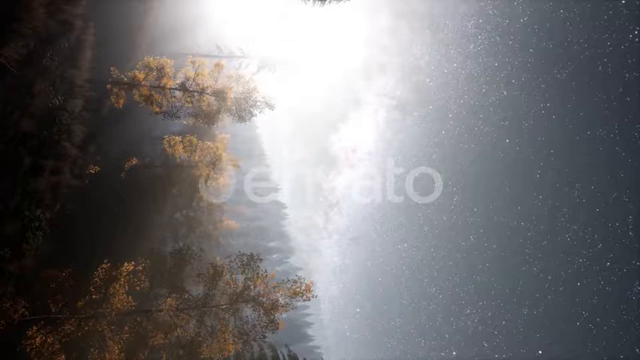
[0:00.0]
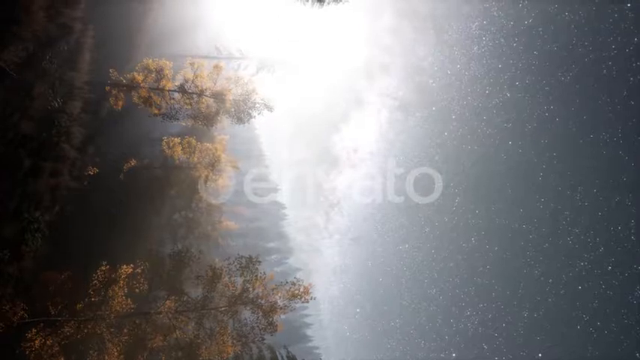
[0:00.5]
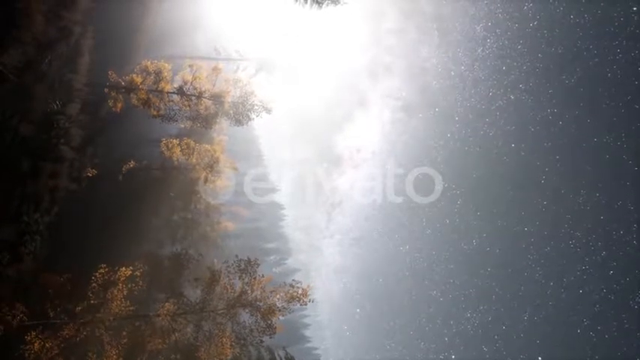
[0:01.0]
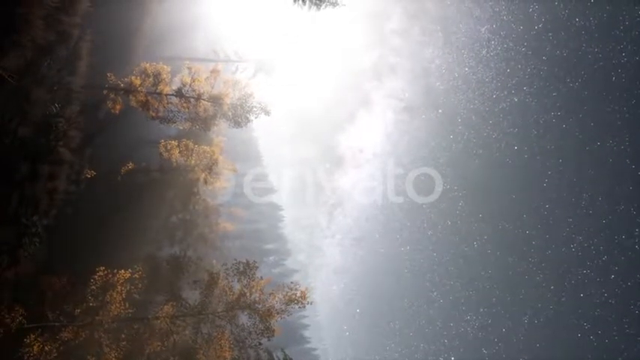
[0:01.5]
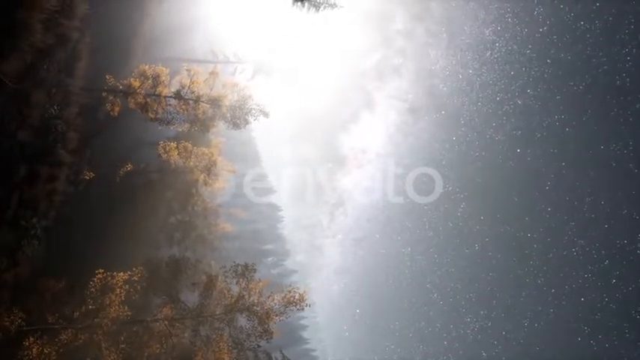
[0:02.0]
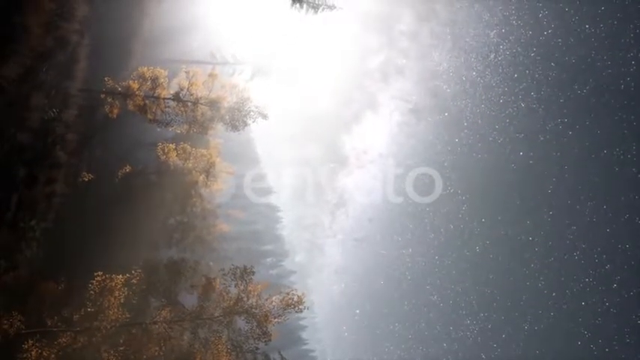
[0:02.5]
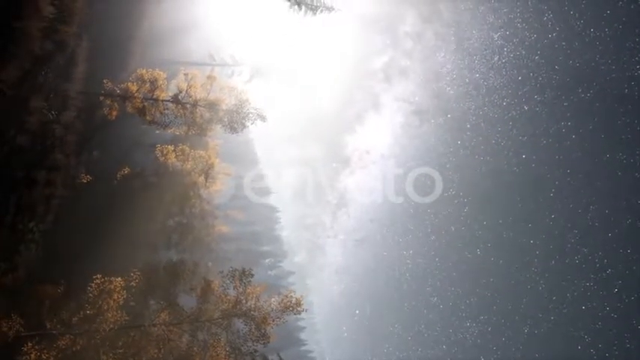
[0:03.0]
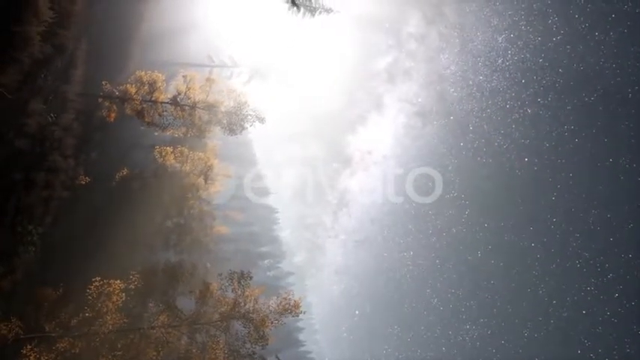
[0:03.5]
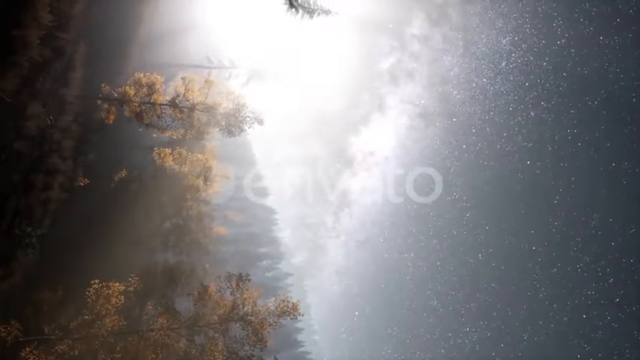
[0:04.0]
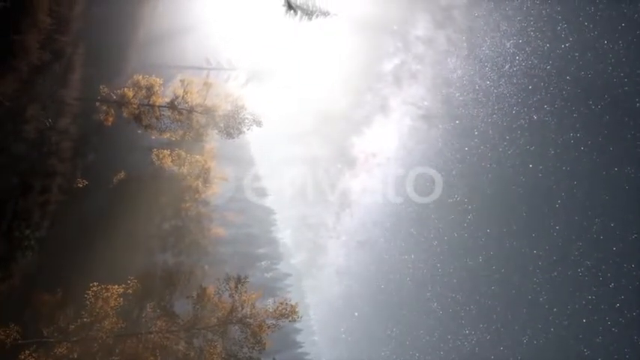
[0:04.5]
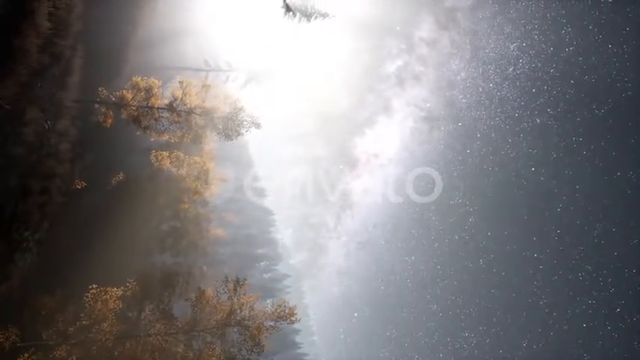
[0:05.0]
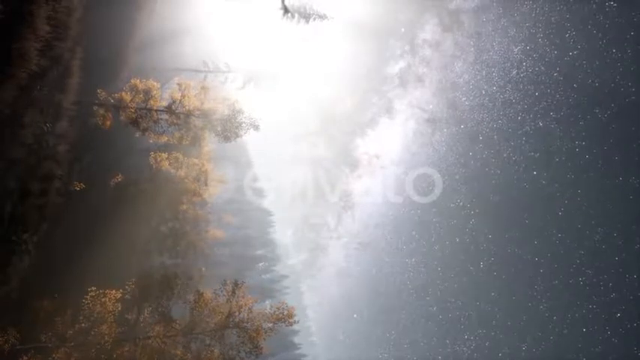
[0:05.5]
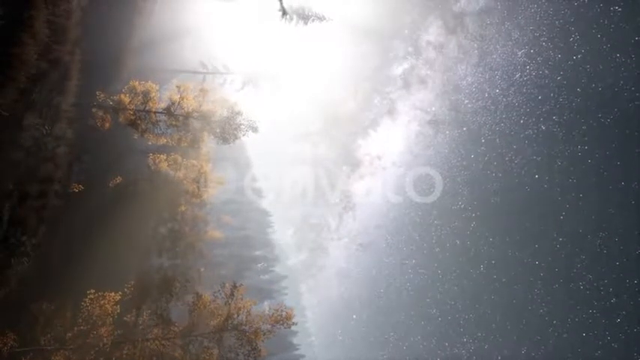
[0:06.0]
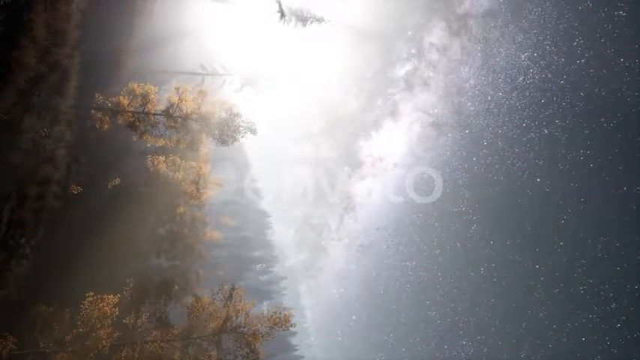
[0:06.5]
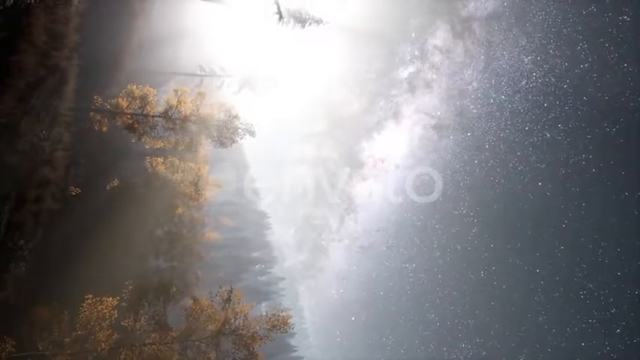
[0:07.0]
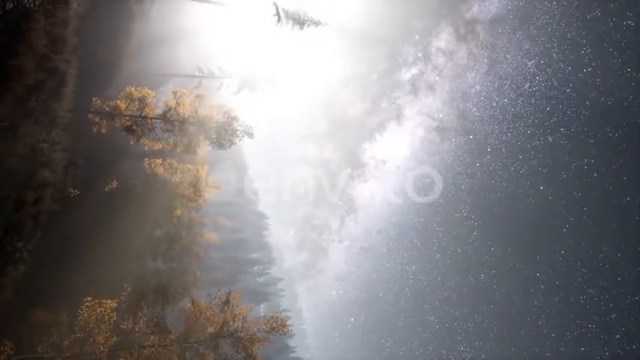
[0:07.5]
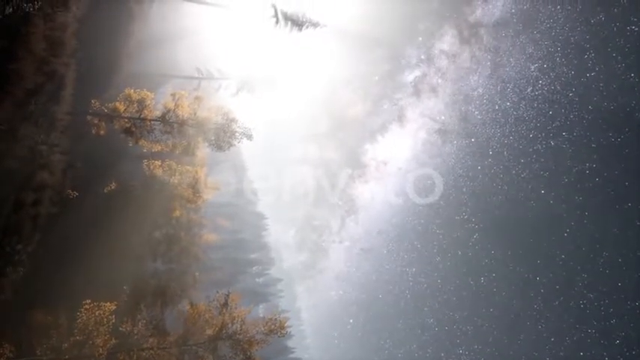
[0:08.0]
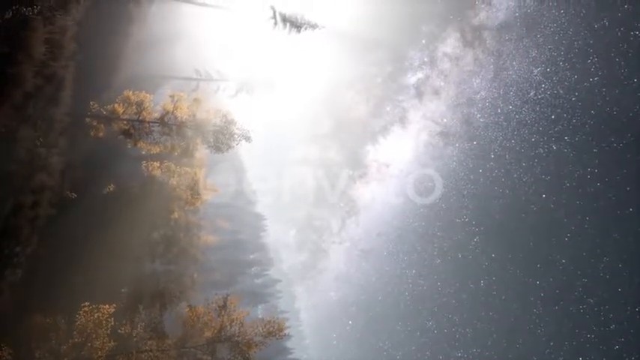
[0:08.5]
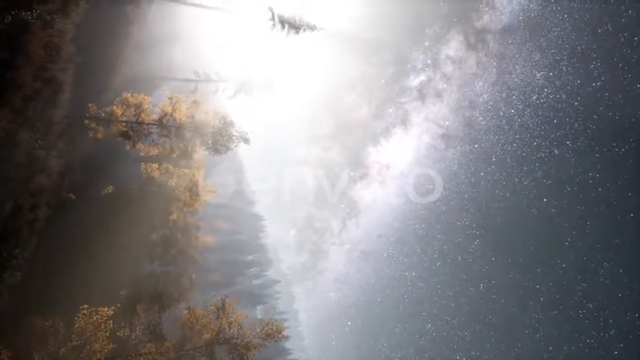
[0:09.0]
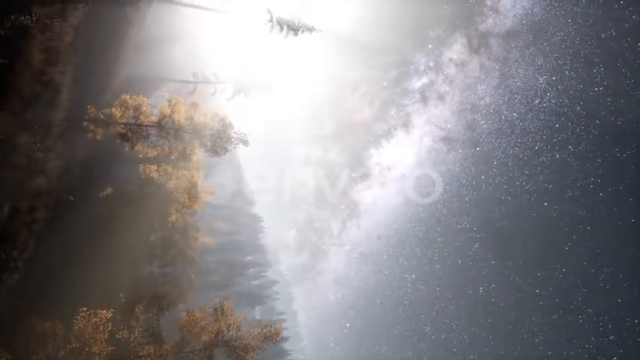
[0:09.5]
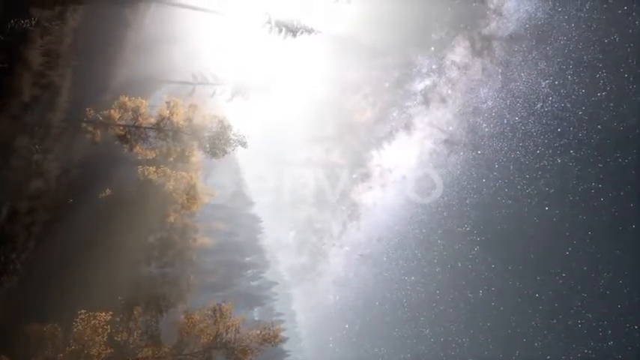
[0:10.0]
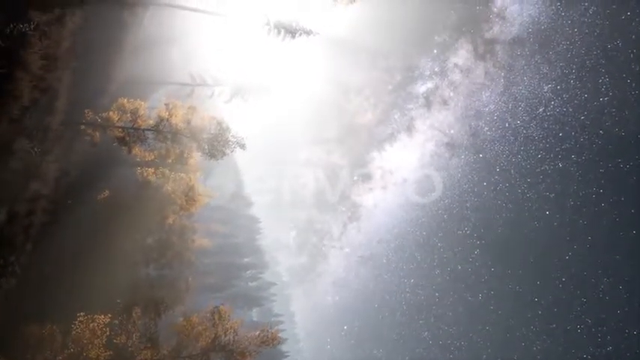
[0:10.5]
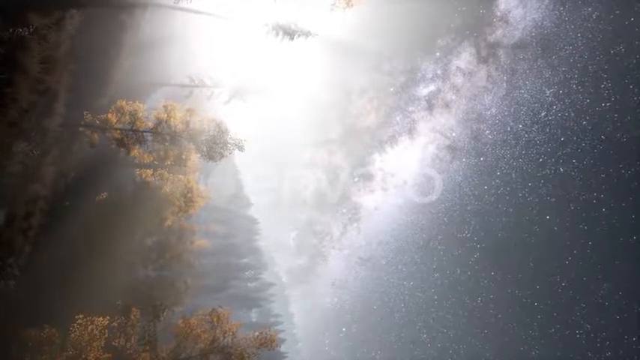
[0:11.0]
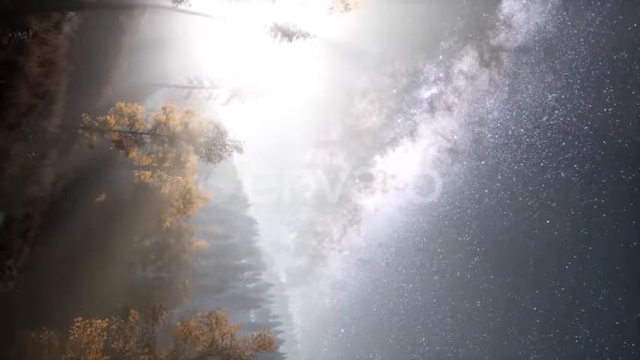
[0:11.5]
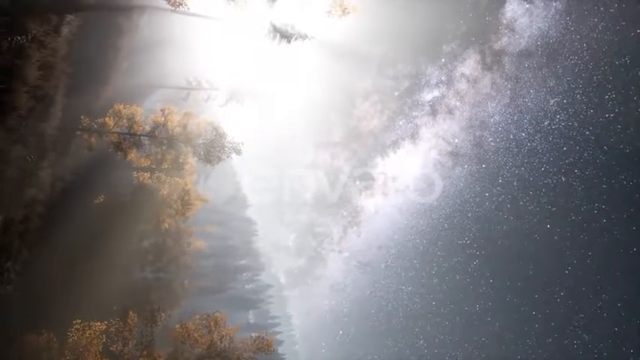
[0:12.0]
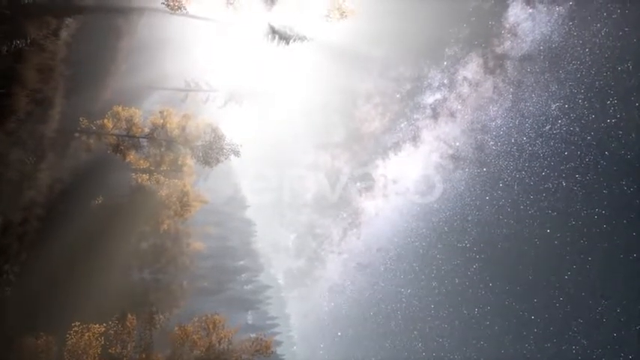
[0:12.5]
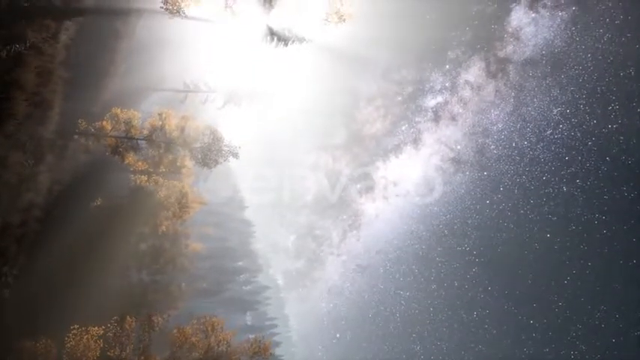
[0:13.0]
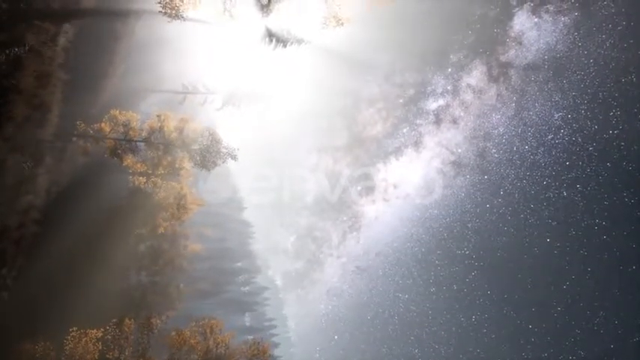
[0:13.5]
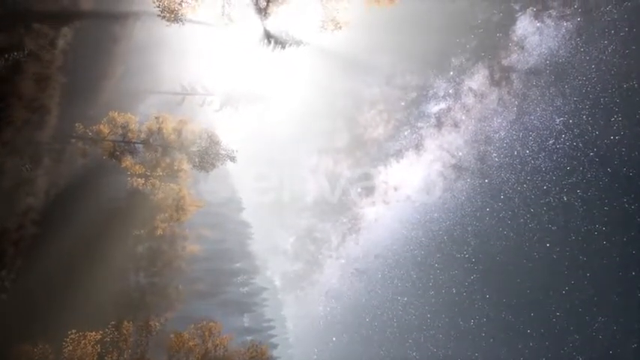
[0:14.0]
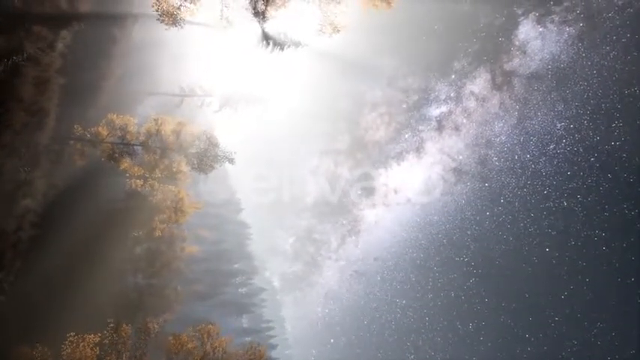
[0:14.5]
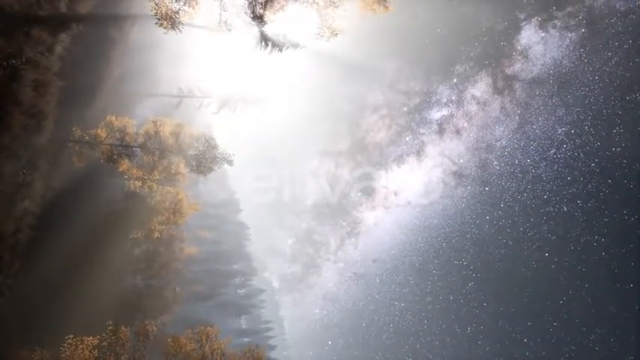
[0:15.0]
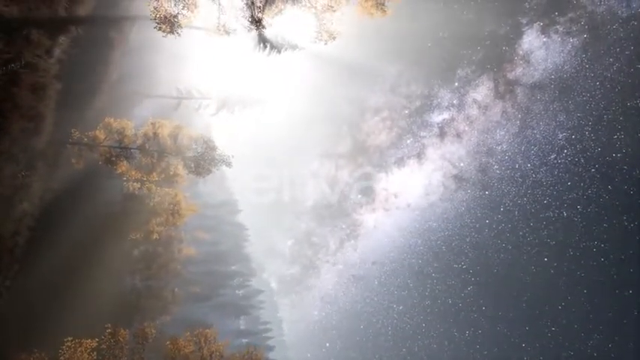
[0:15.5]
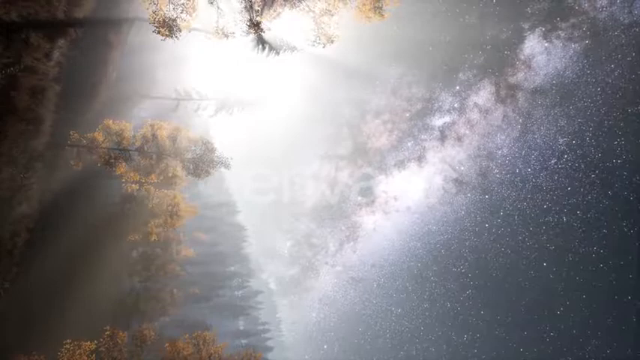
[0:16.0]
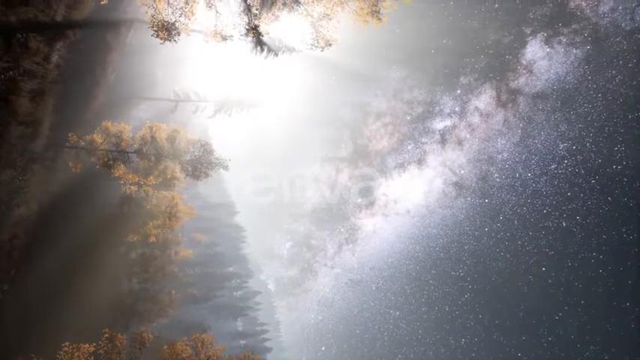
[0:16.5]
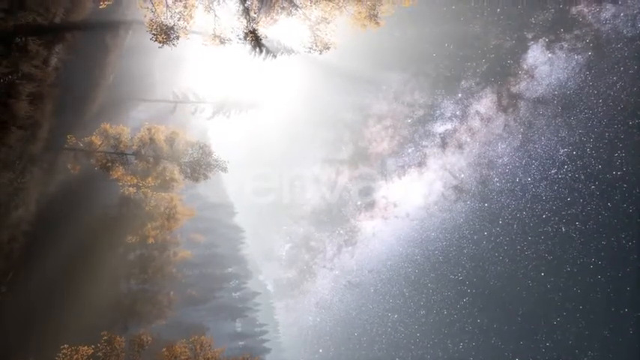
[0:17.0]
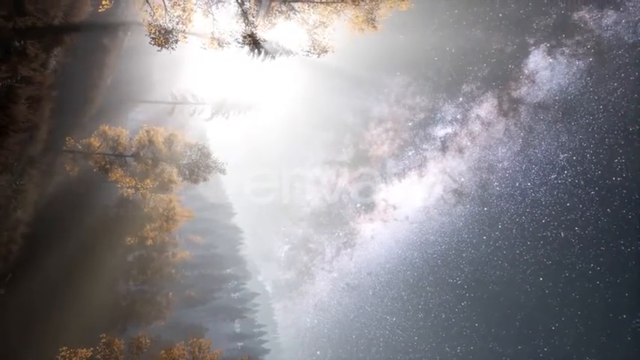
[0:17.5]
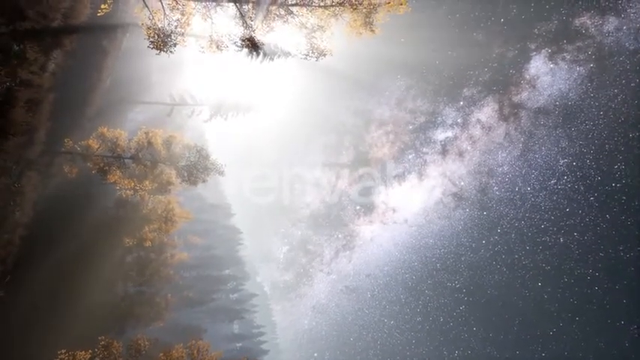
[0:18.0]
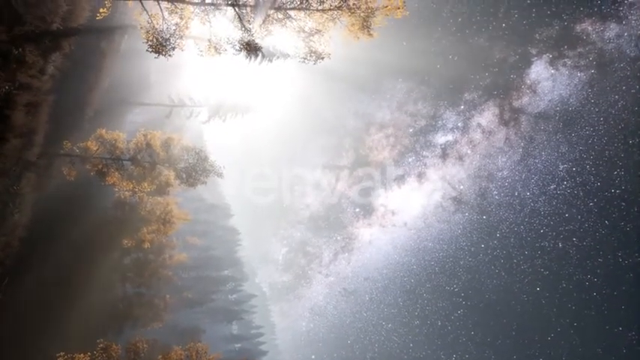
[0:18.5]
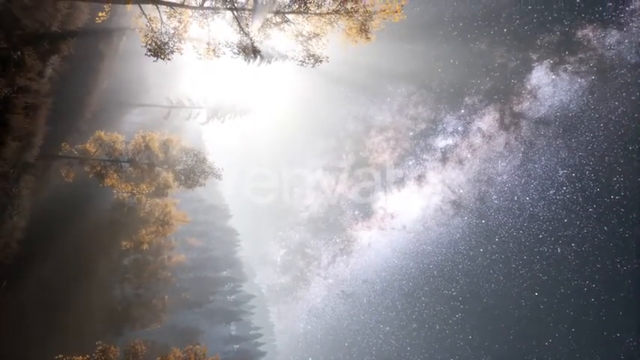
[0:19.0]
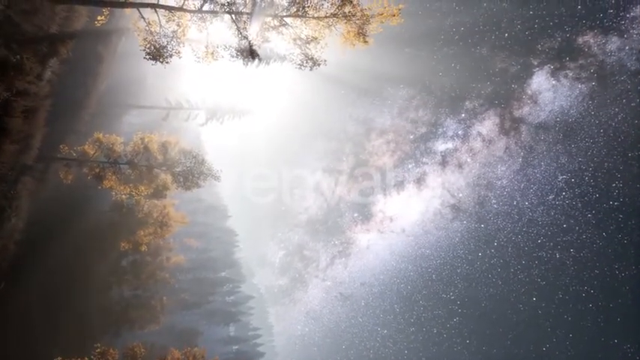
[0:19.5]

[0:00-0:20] The scene appears to be underwater, with green plants on the left-hand side. The right-hand side is darker than the center, where bright white light comes in, so the view seems to look up toward the surface. An overlay of text is hard to read but appears to end with "VATO". There is very slight movement across the scene from left to right. It is unclear whether the view is underwater or looking up through a forest canopy: on the left there may be branches coming in from the left toward the right, possibly from some type of pine tree, though the dark area on the right remains unexplained.